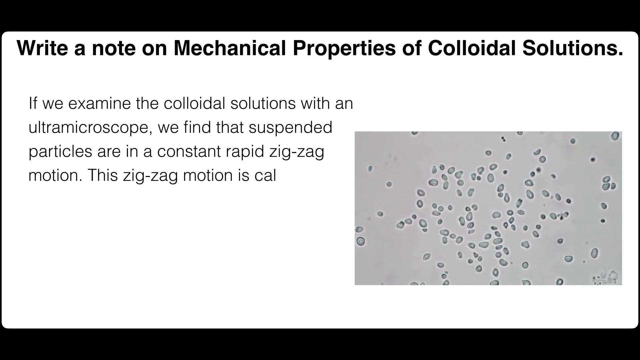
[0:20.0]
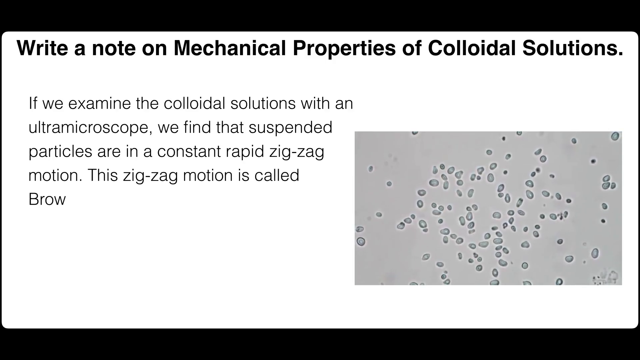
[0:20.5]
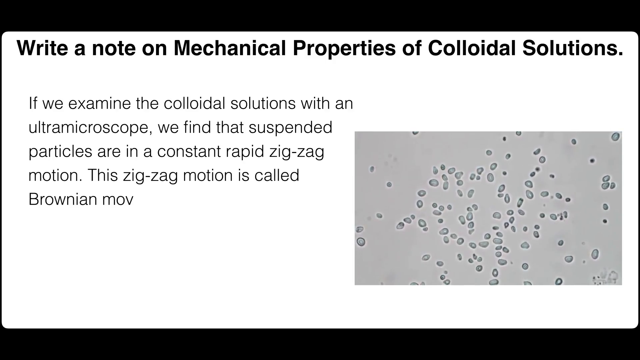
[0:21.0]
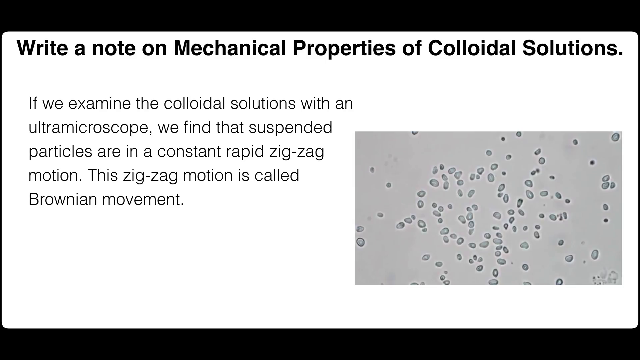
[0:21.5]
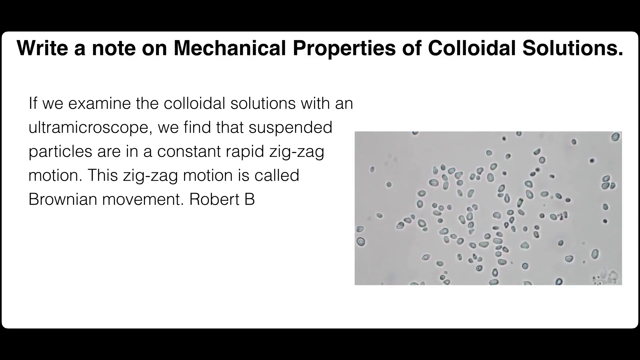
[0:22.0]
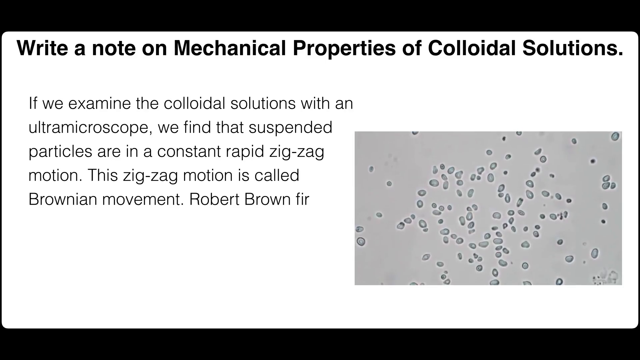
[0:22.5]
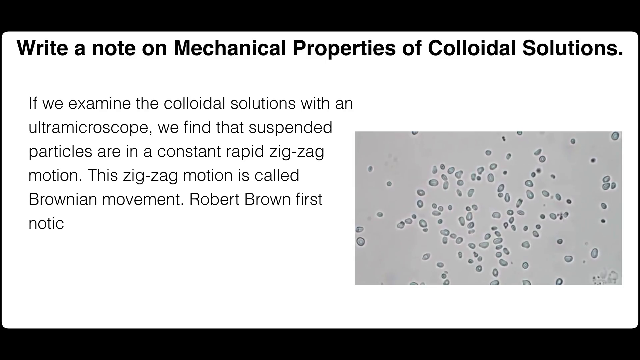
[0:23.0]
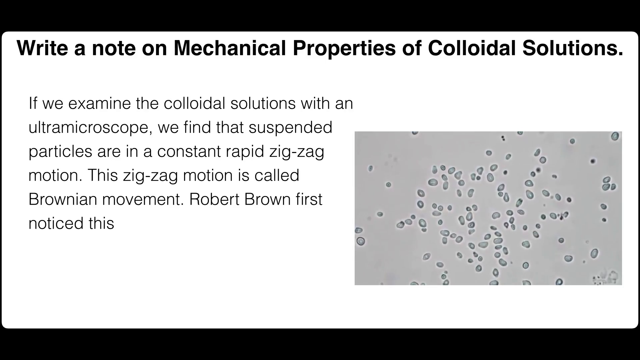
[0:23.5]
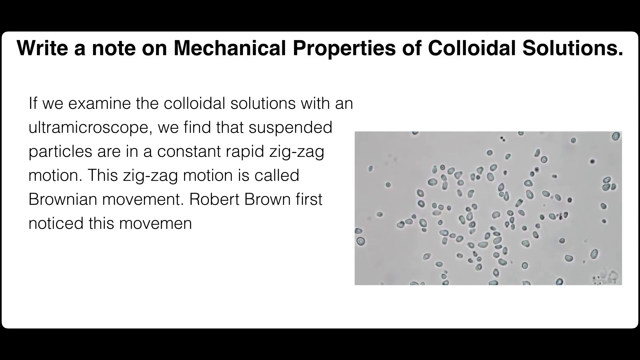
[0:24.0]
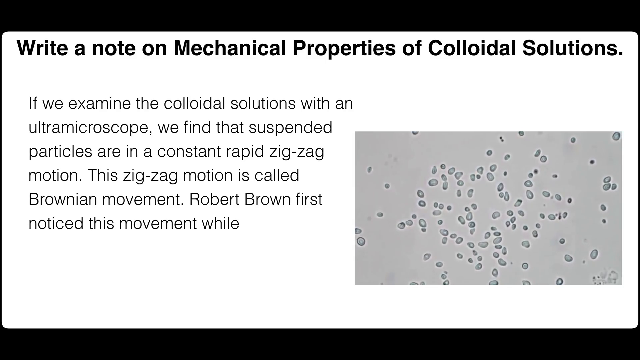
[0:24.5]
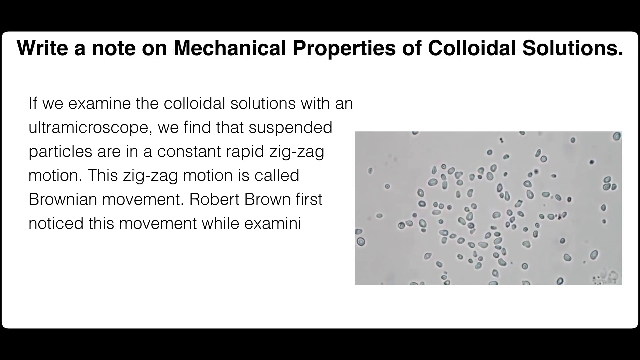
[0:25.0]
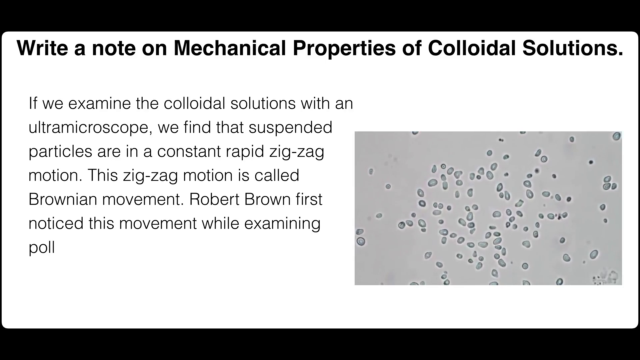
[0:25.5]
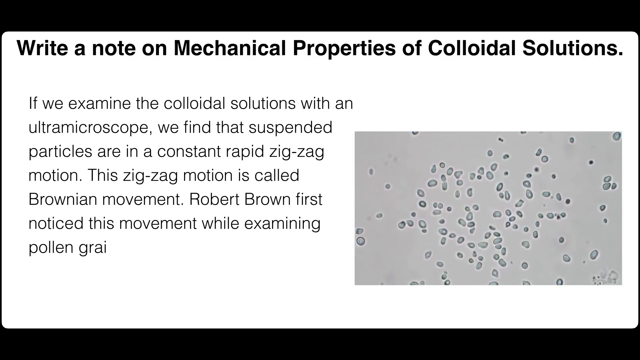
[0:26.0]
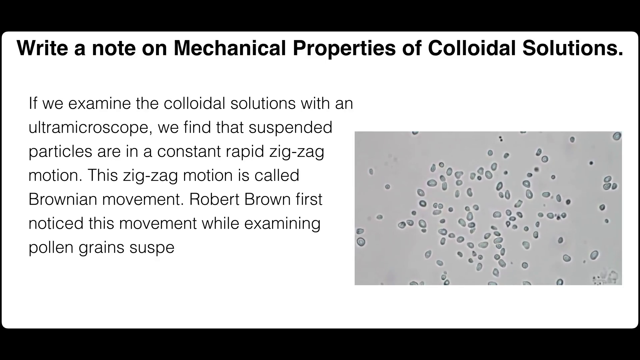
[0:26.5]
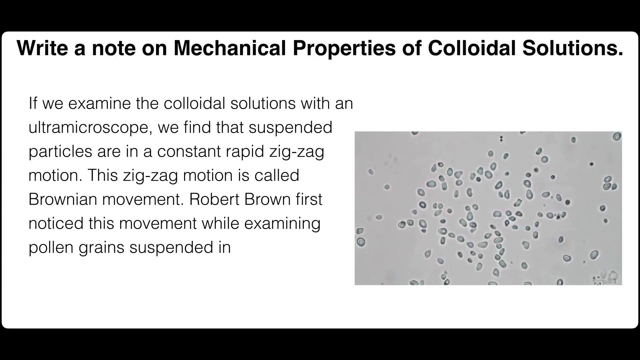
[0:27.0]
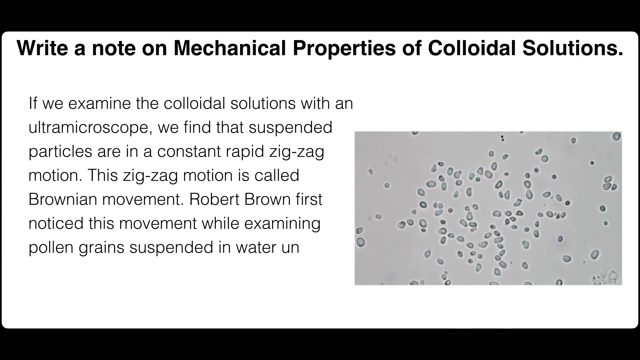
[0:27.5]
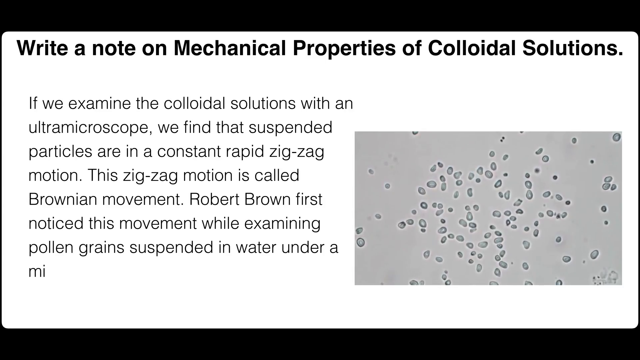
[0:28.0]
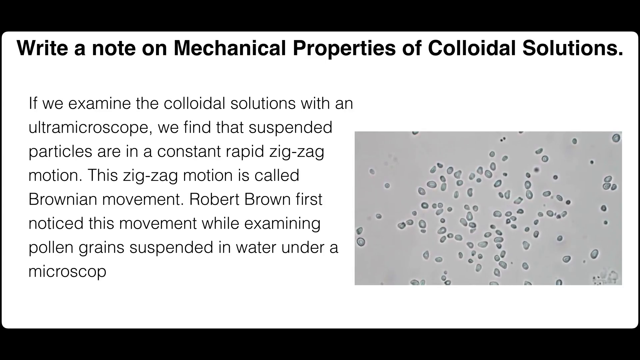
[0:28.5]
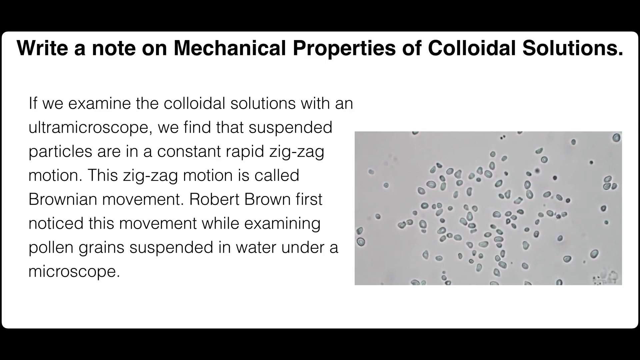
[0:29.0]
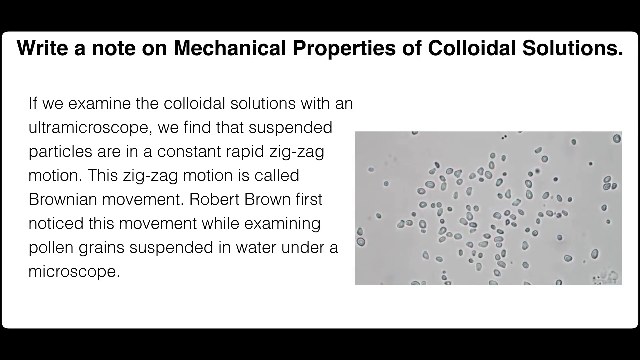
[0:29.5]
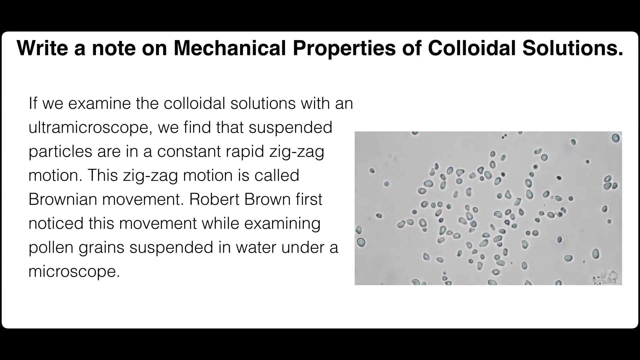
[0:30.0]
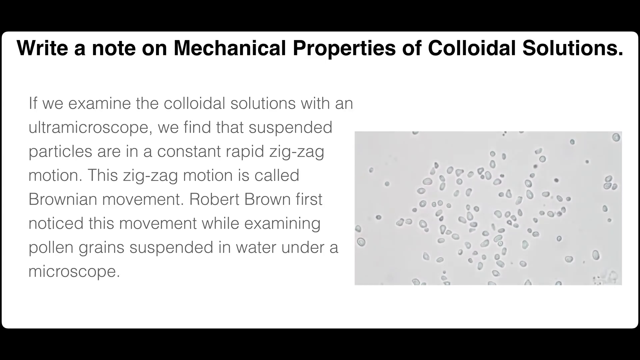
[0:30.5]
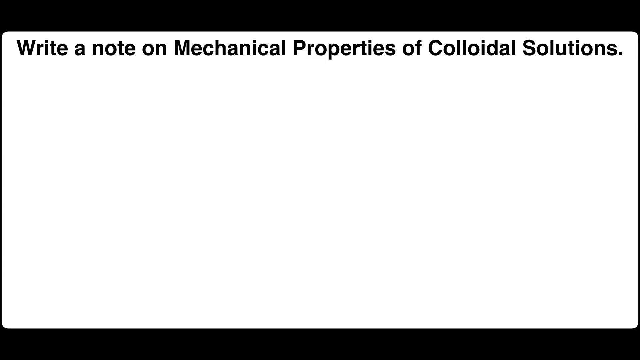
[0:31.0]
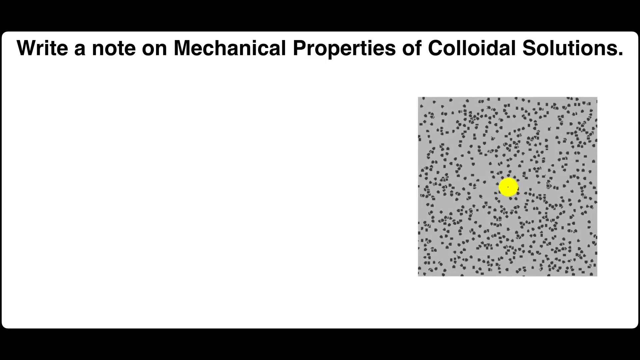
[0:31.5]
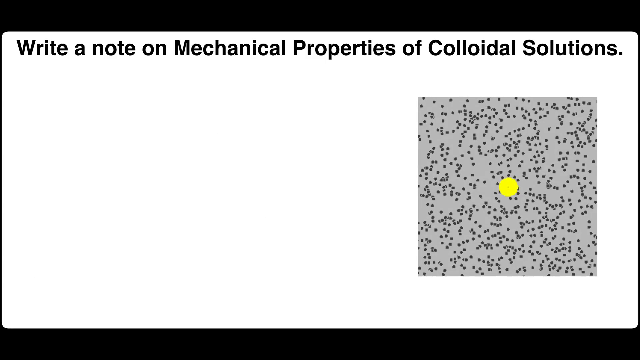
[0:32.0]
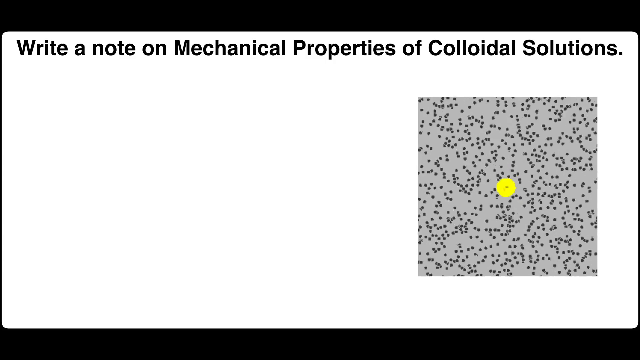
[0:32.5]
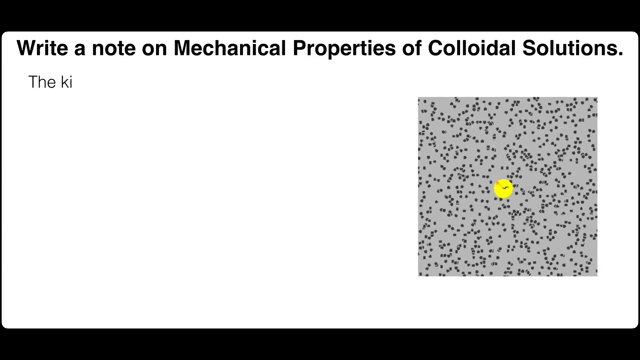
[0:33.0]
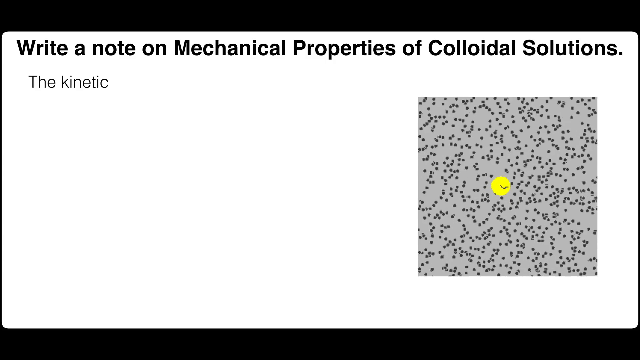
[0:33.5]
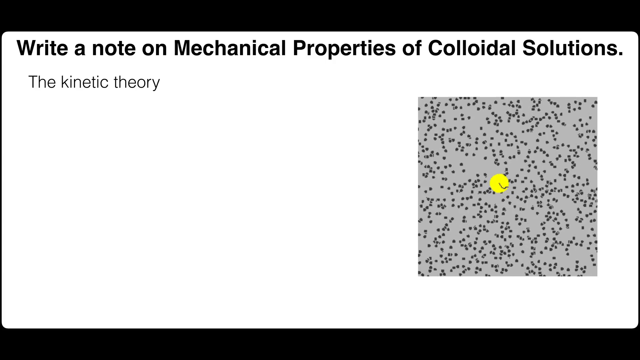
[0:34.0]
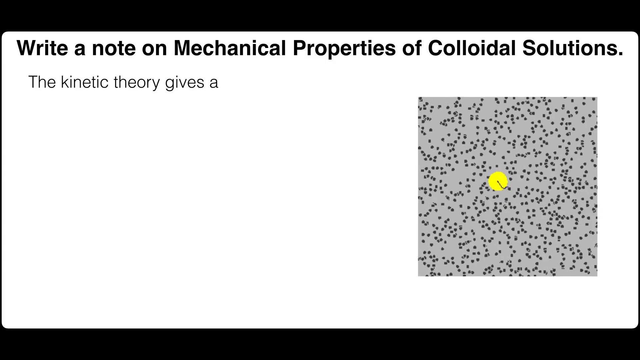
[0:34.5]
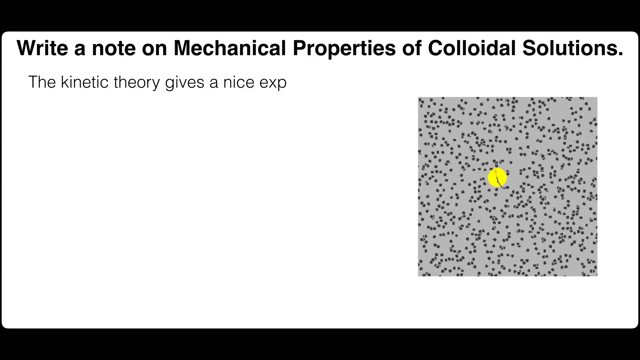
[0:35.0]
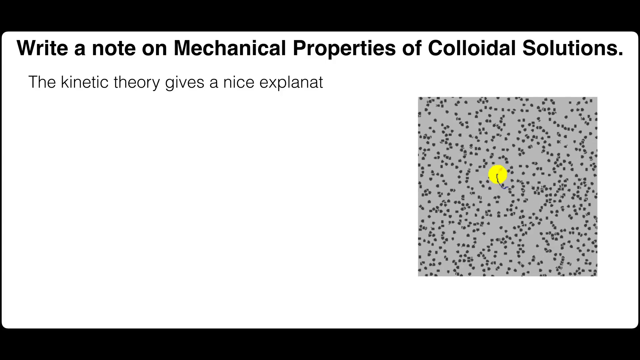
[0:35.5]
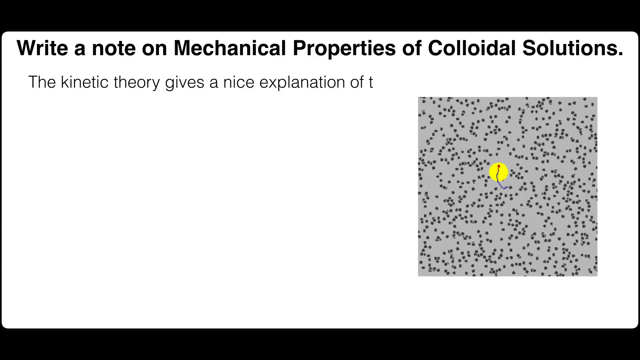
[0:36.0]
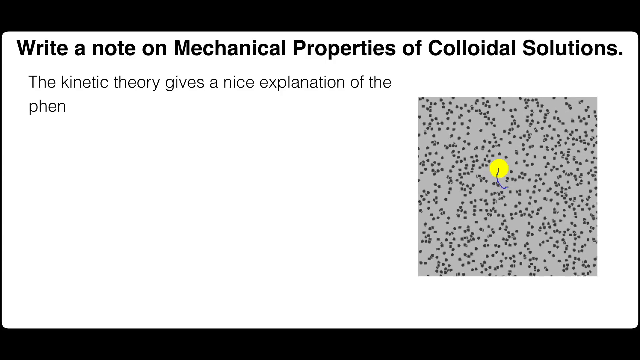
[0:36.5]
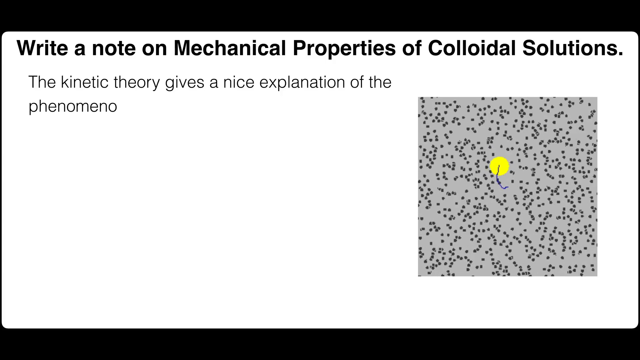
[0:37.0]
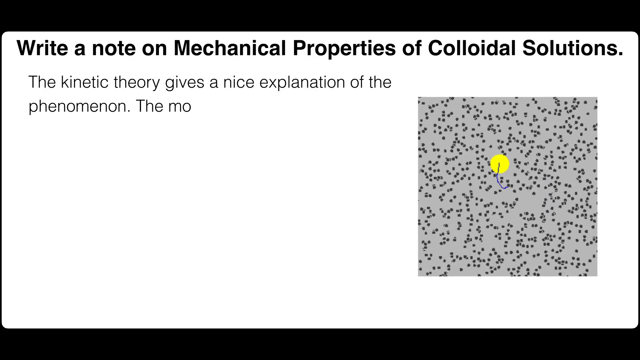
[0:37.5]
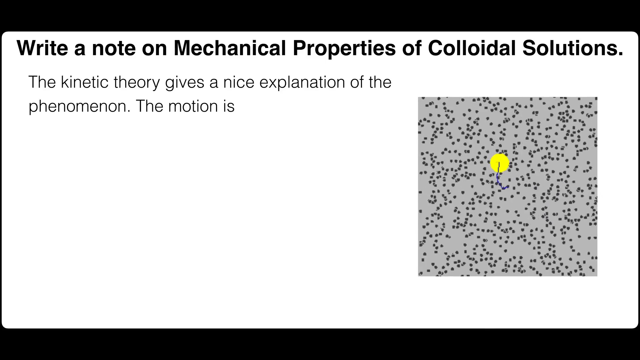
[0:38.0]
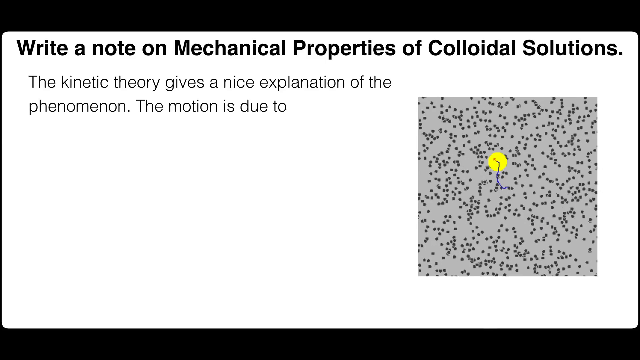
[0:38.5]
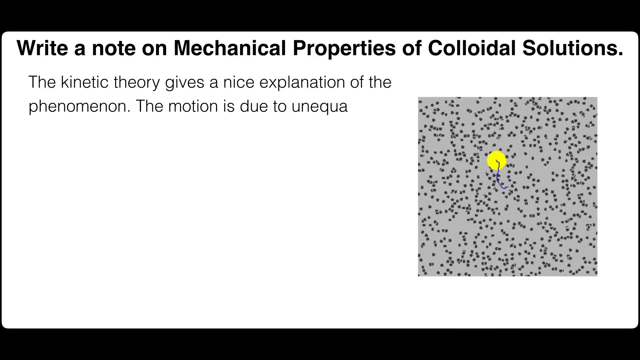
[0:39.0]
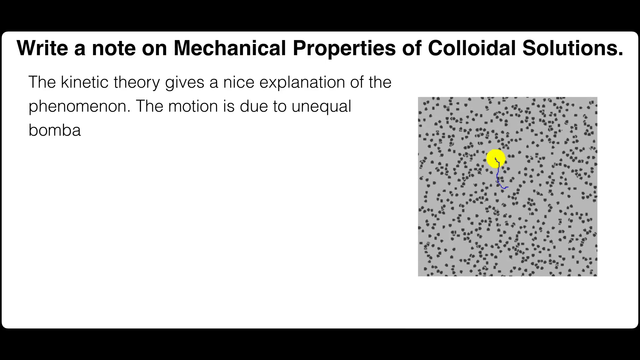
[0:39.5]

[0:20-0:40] A slide with a plain white background and black font presents the mechanical properties of colloidal solutions and how they appear under a microscope, covering the constant zigzag motion called Brownian movement, named after the scientist Robert Brown, who noticed it while studying pollen grains suspended in water under a microscope. The heading, "Write a note on Mechanical Properties of Colloidal Solutions", is also in black font but larger and in bold. An inserted video at the bottom right corner of the screen shows the suspended solution moving in a zigzag motion.